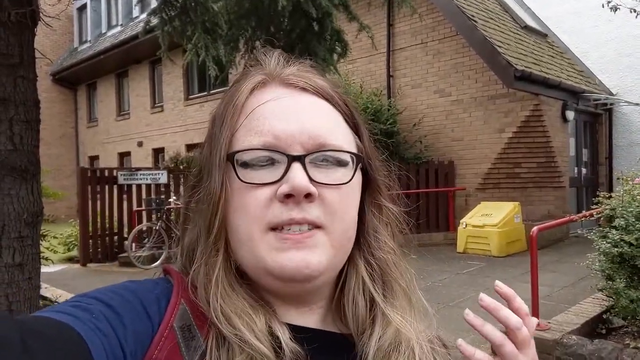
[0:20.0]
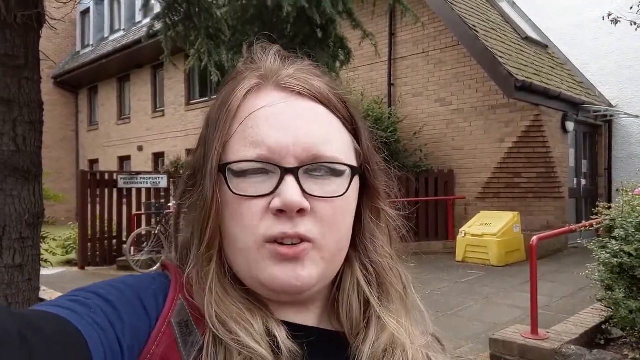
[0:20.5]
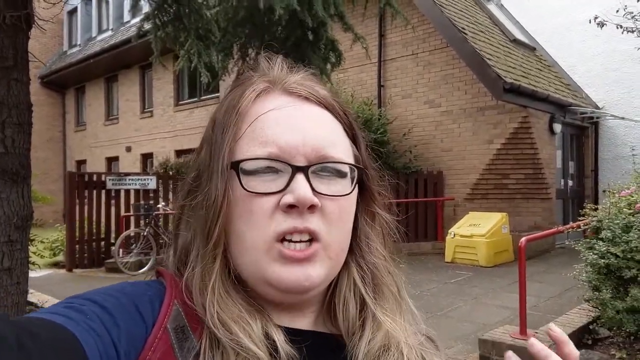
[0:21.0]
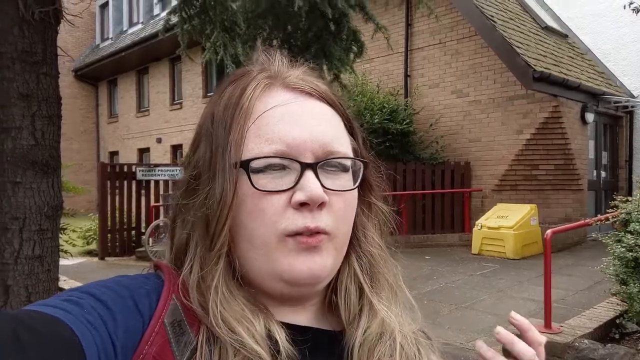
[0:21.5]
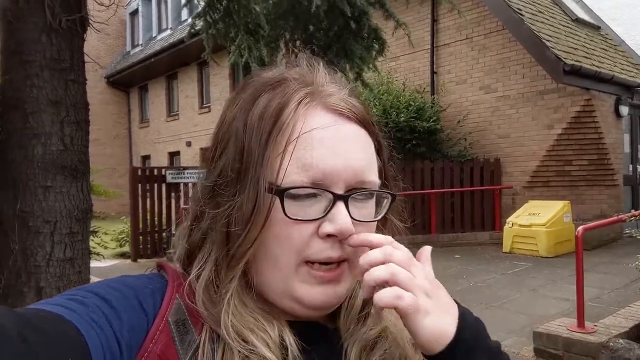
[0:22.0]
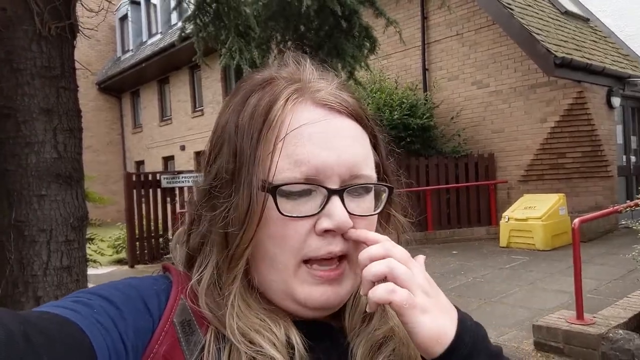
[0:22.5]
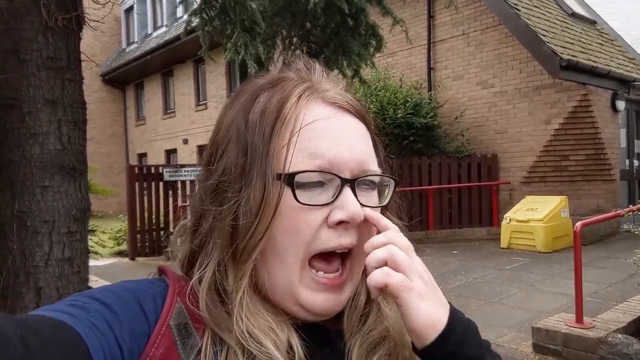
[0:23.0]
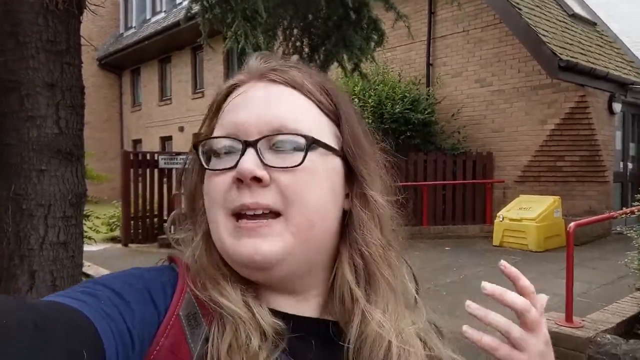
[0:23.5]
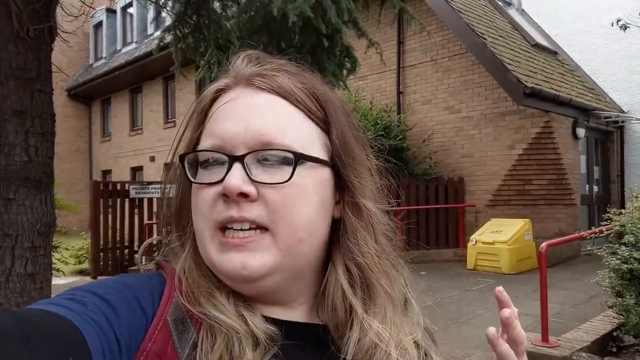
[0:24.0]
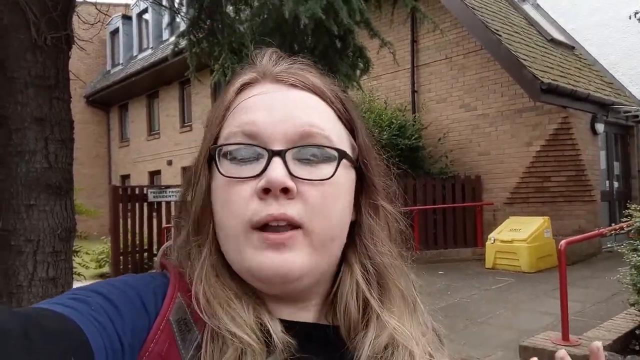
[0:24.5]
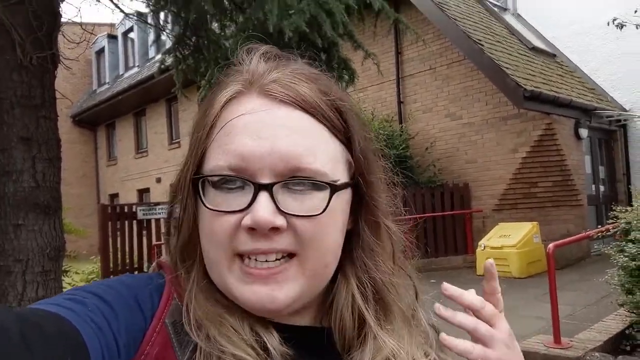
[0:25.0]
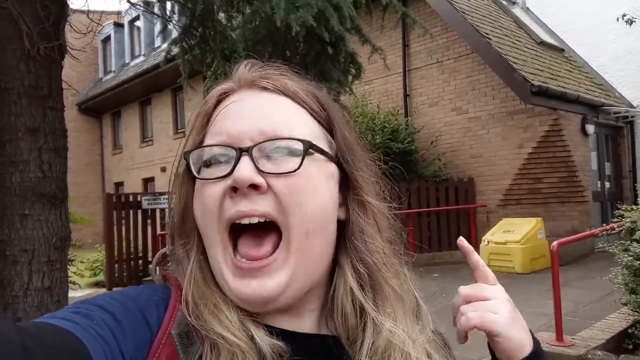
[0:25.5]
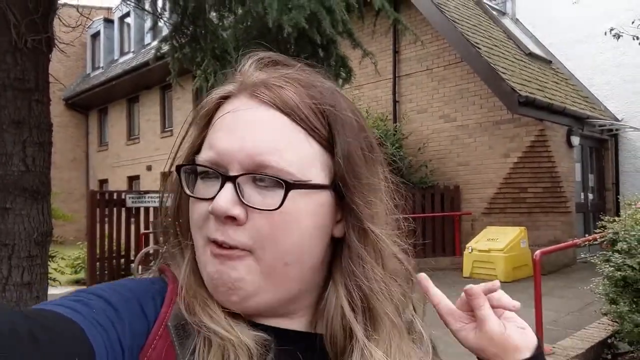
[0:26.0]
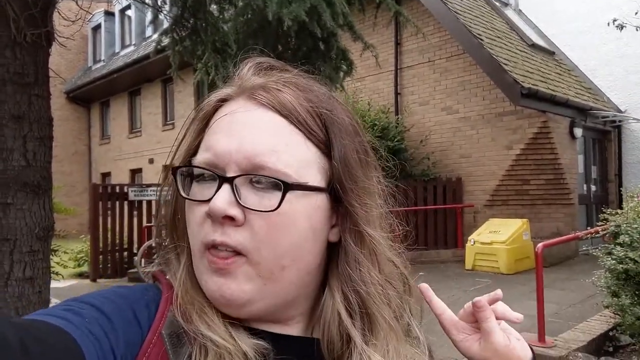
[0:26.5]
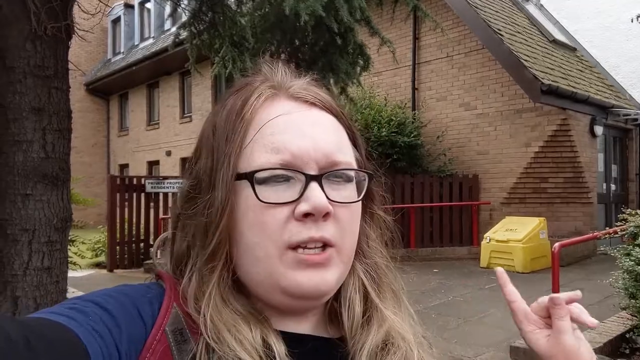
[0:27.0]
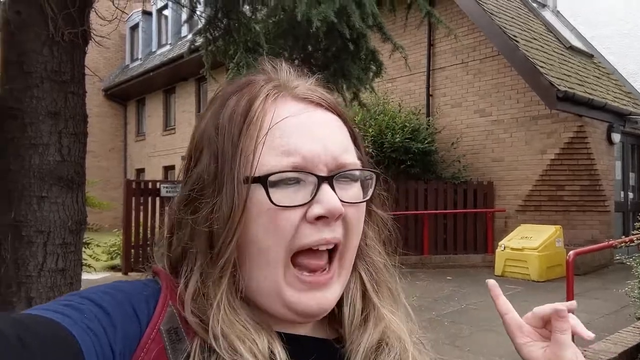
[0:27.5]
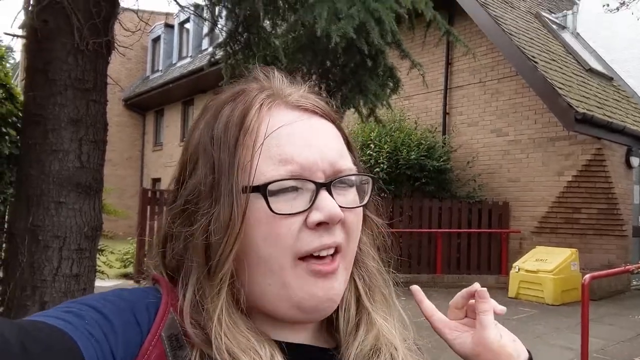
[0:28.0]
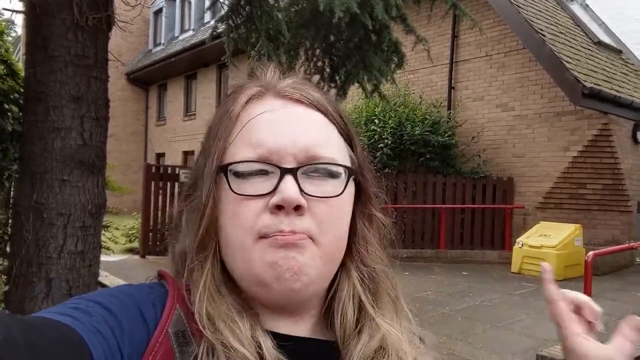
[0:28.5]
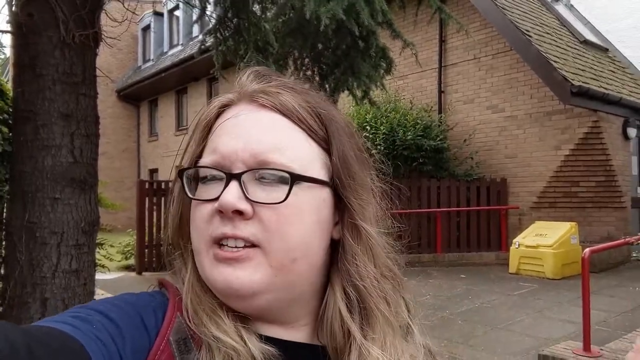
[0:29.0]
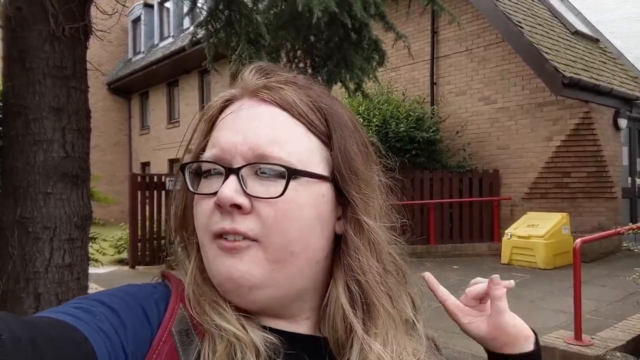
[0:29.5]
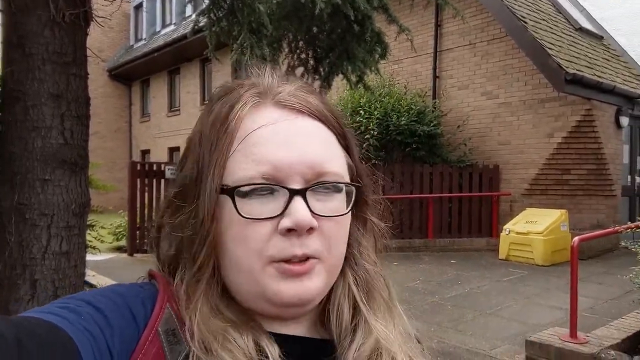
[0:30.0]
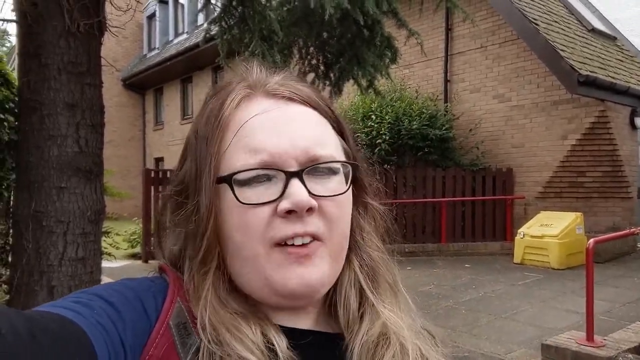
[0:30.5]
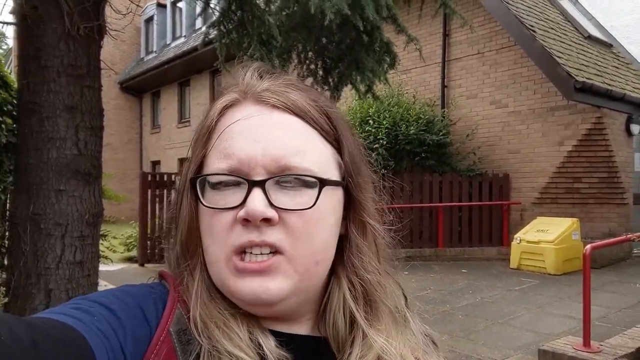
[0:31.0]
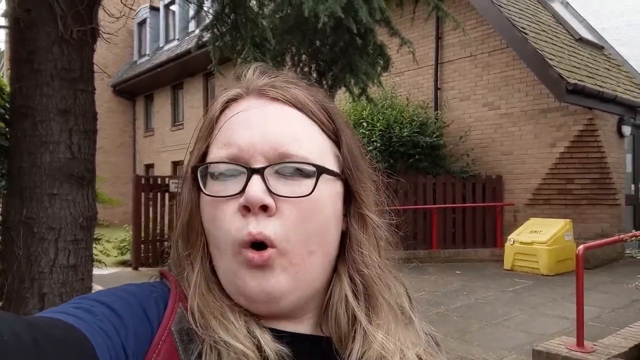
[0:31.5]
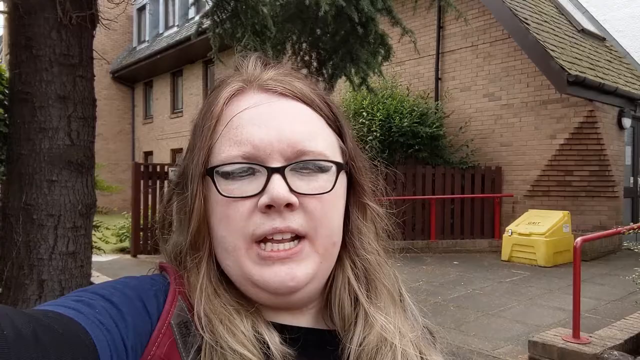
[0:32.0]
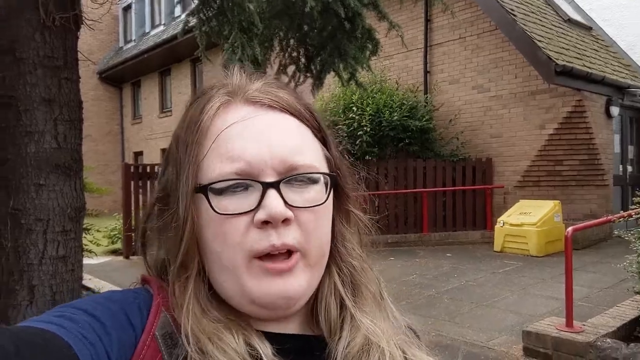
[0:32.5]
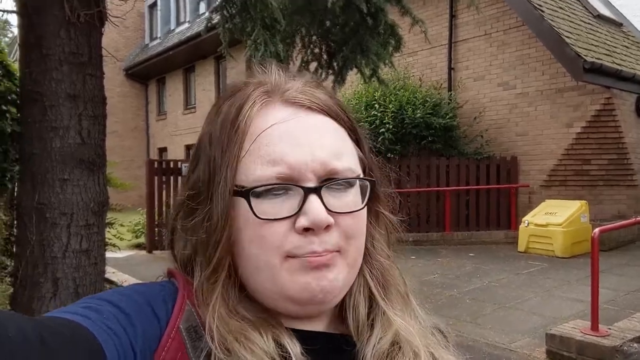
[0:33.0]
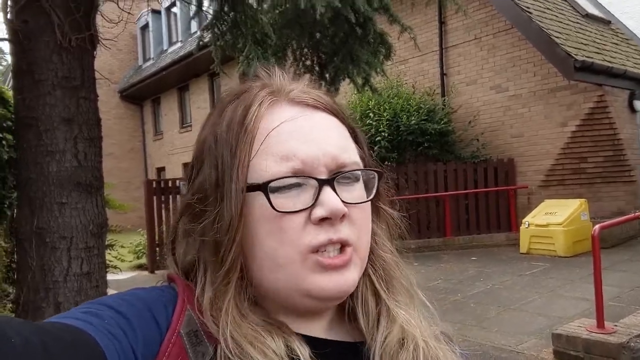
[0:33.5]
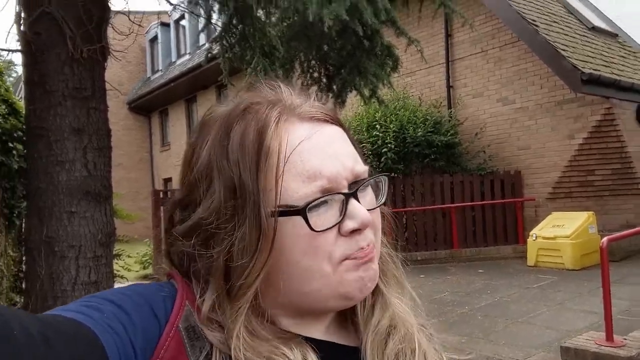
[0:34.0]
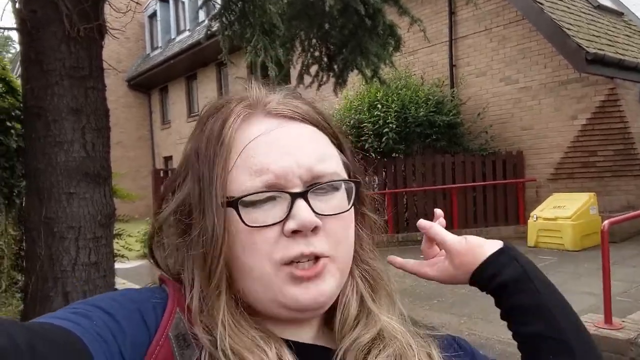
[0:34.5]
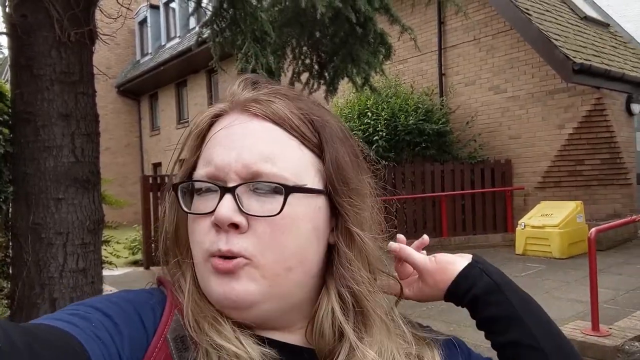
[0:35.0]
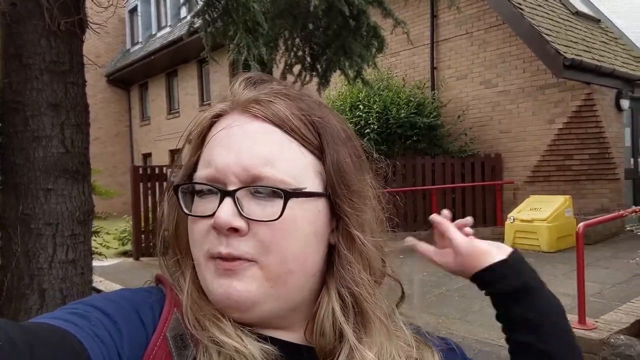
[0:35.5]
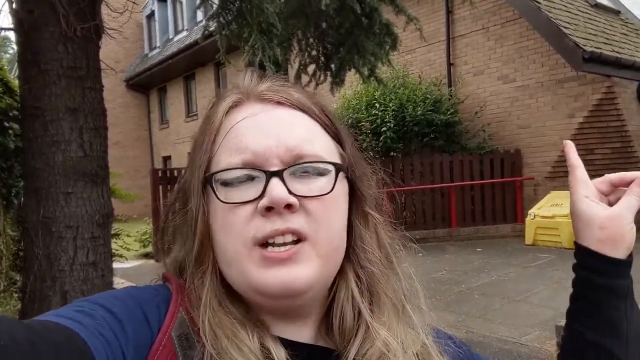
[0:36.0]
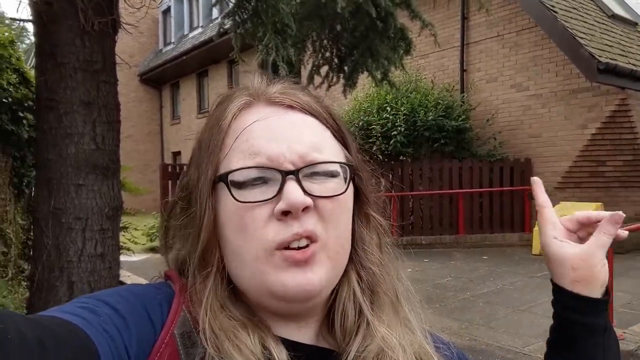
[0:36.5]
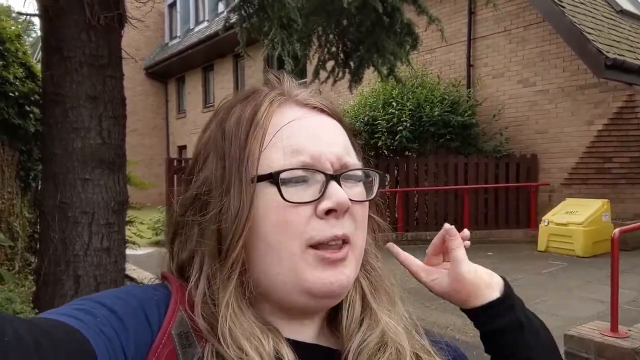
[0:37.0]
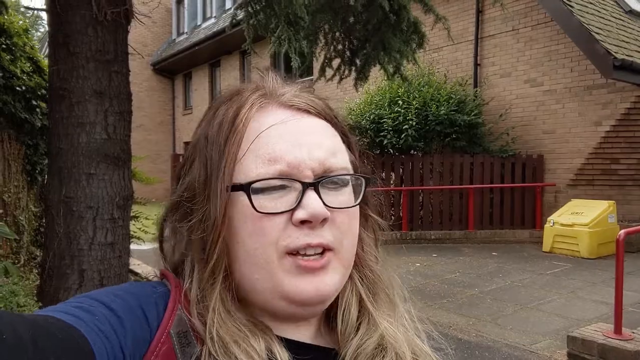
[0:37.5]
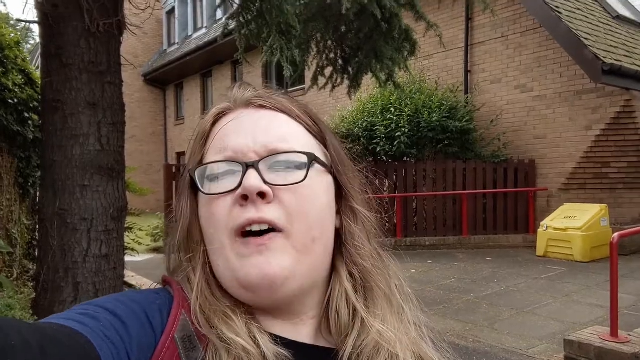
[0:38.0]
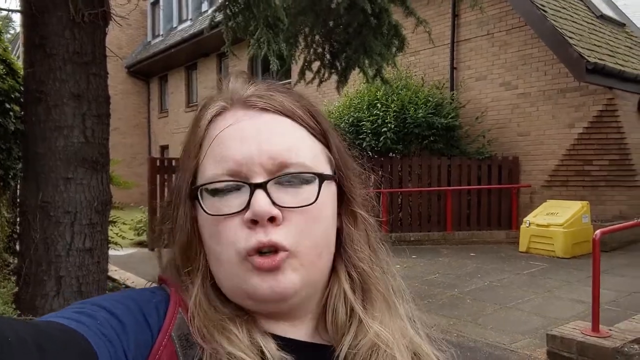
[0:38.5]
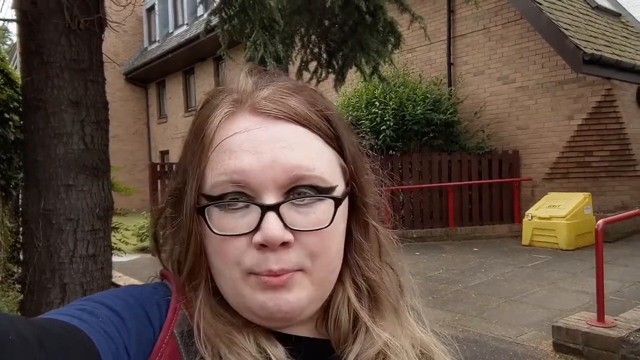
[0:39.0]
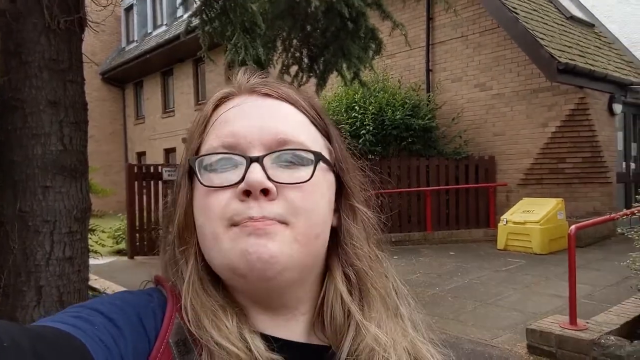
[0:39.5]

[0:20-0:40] The woman continues her selfie video, jabbing a finger of her left hand. More of the apartment block is visible; it appears to be three storeys tall. She grows angrier, repeatedly jabbing her finger and moving her head around expressively. Over her right shoulder, a sign states that the apartments are private property and for residents only. A bike is parked against the railings, and a hedge is visible off to her left. The area stays quiet with no one else around, and she does not look happy.